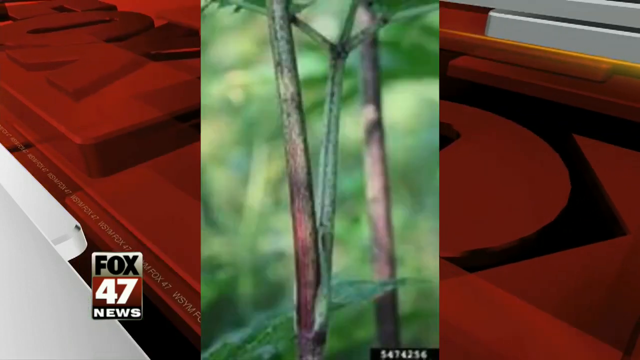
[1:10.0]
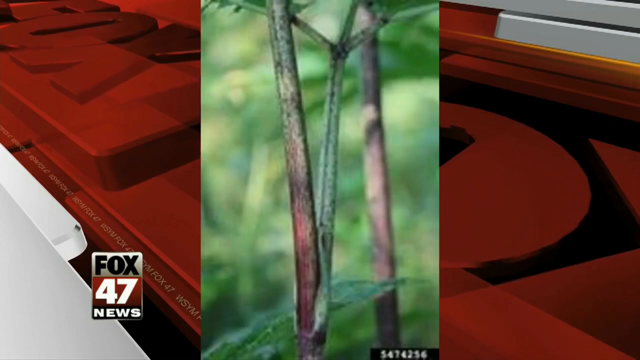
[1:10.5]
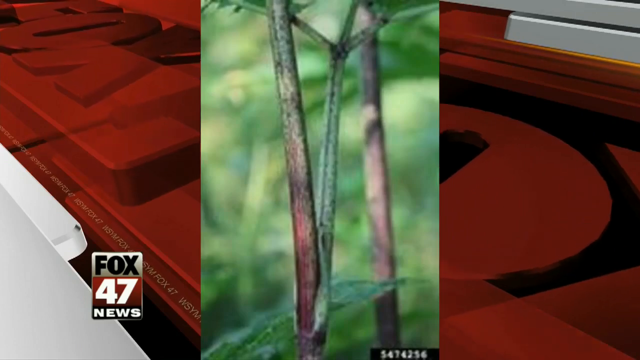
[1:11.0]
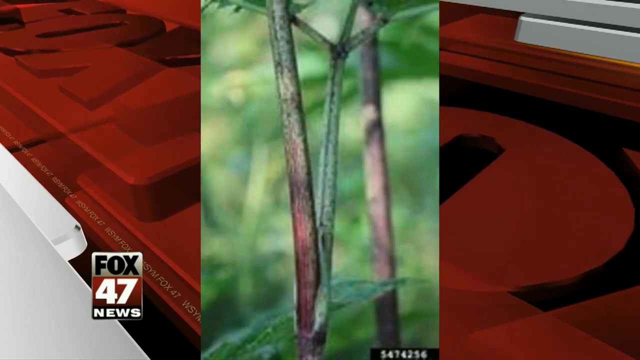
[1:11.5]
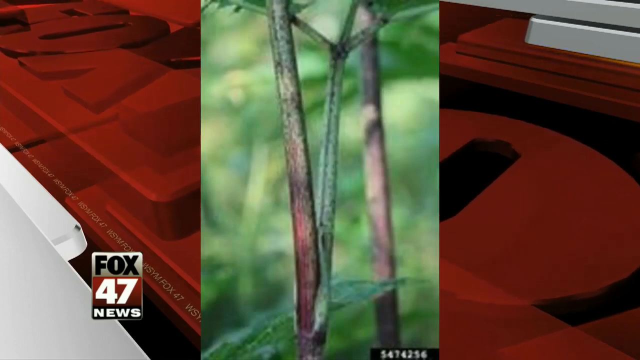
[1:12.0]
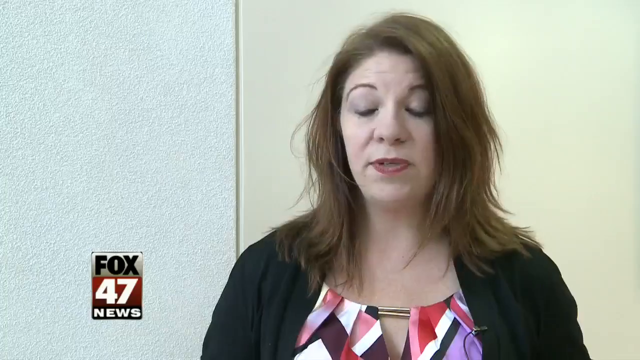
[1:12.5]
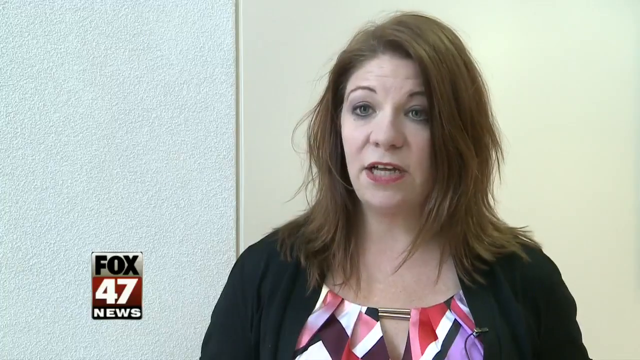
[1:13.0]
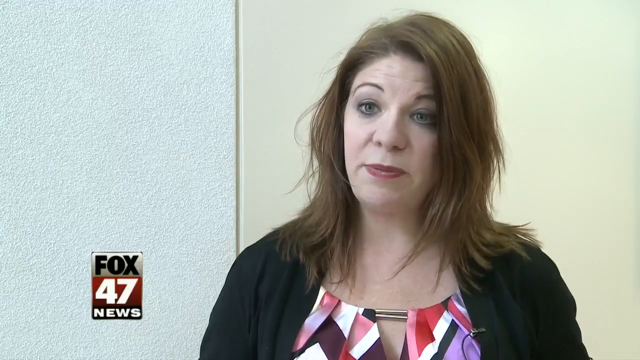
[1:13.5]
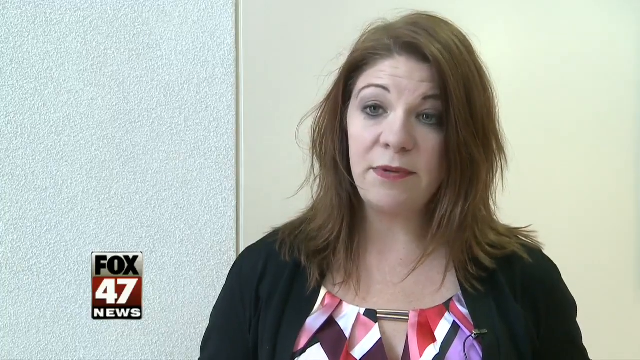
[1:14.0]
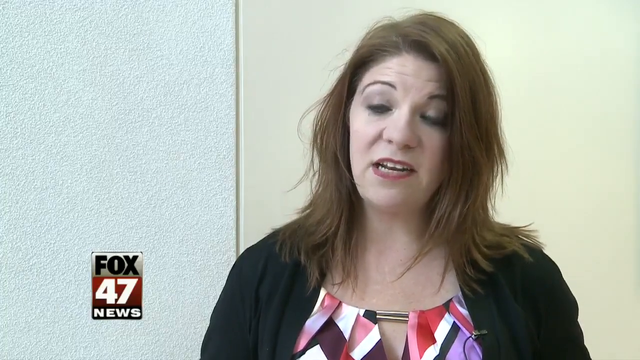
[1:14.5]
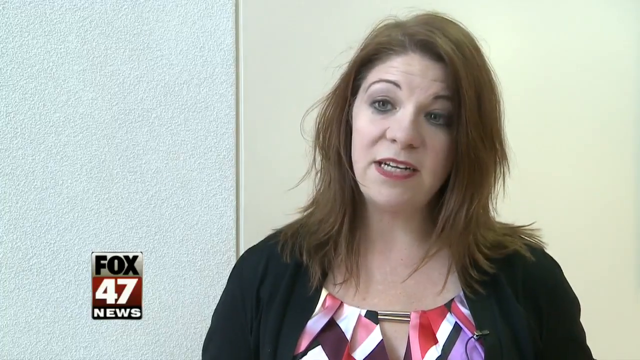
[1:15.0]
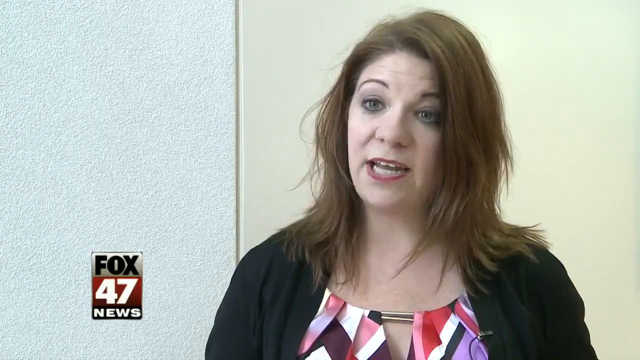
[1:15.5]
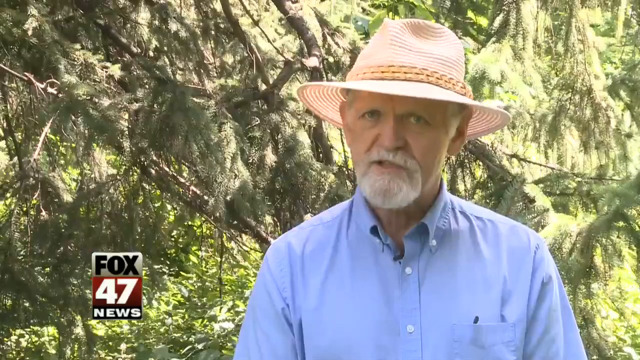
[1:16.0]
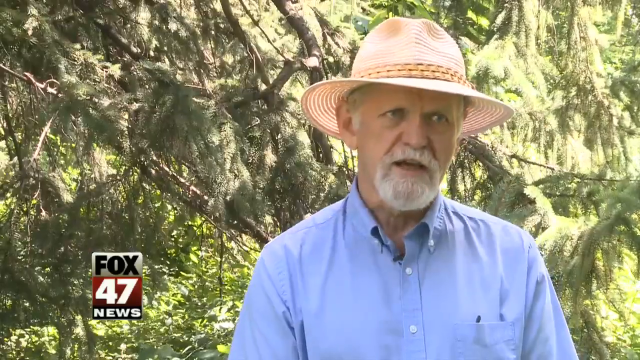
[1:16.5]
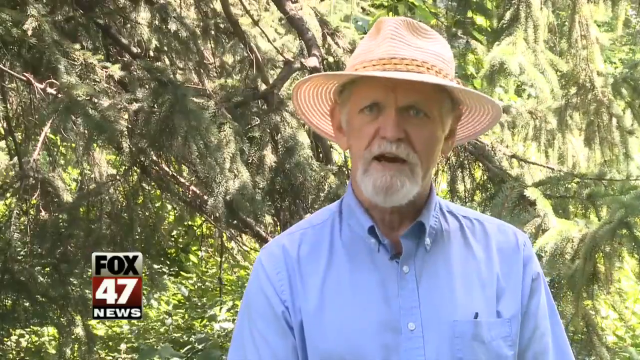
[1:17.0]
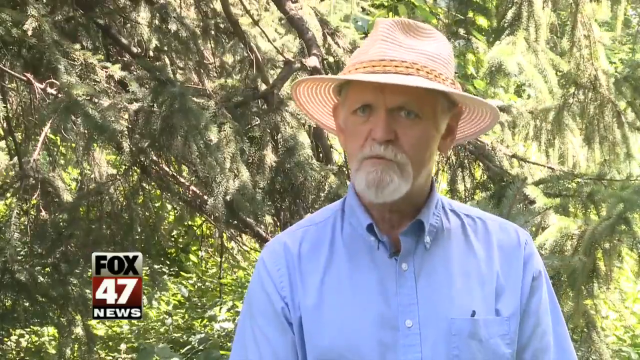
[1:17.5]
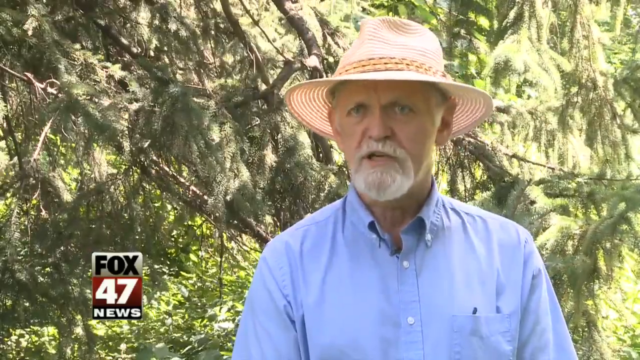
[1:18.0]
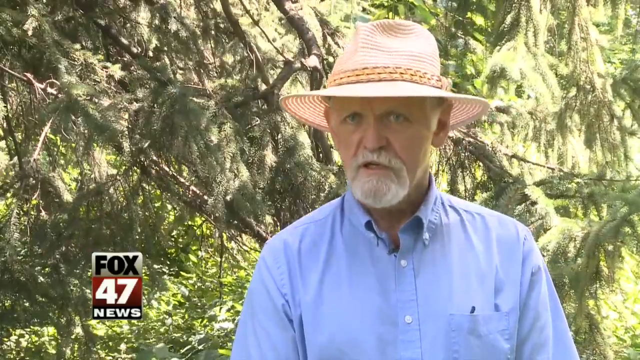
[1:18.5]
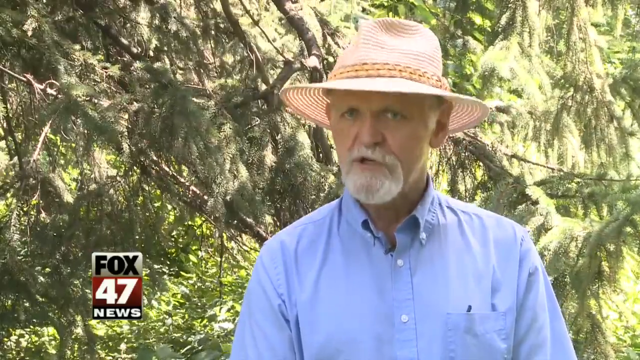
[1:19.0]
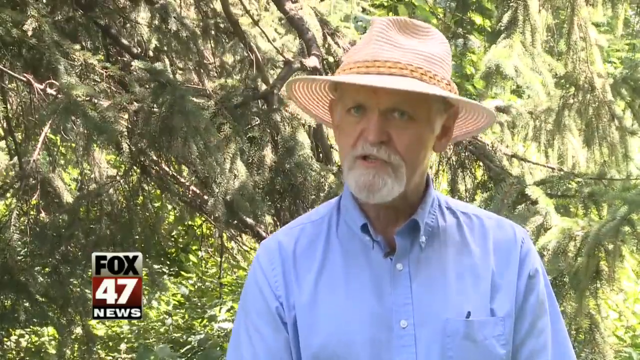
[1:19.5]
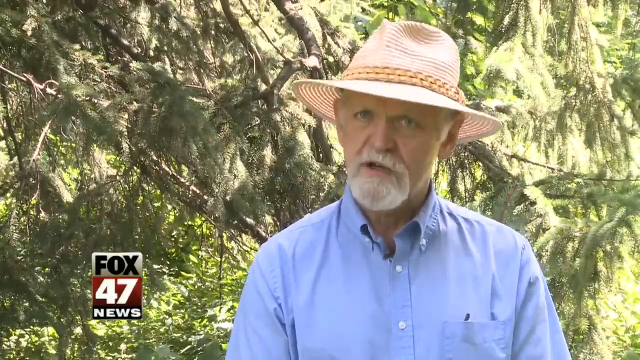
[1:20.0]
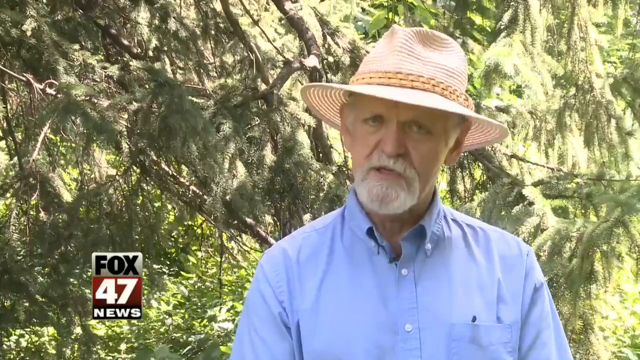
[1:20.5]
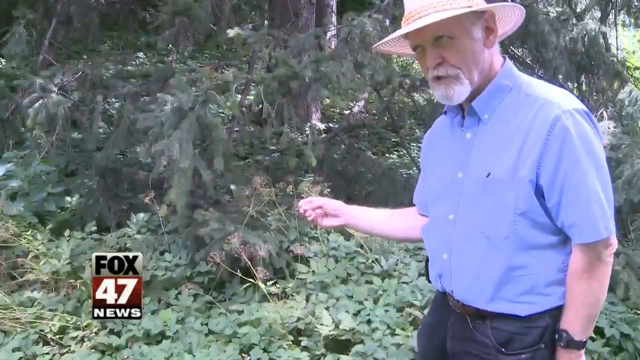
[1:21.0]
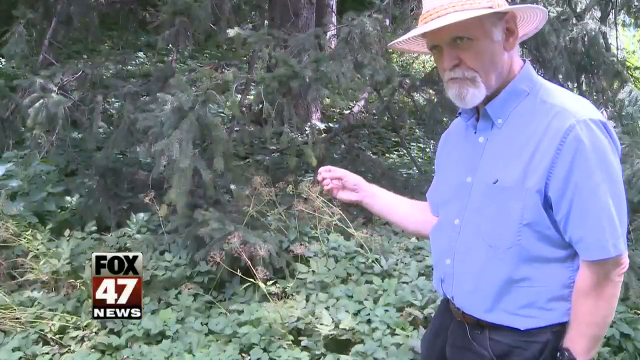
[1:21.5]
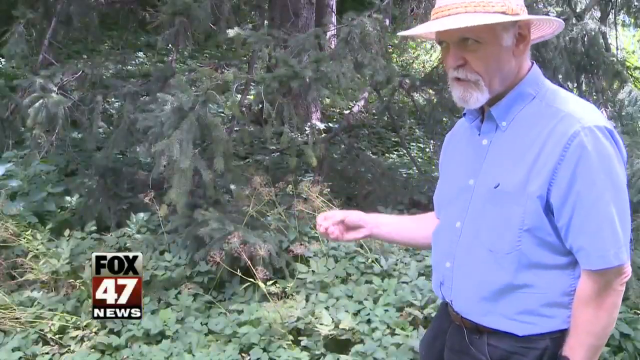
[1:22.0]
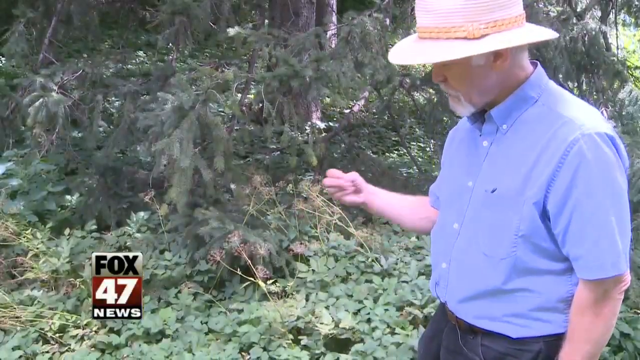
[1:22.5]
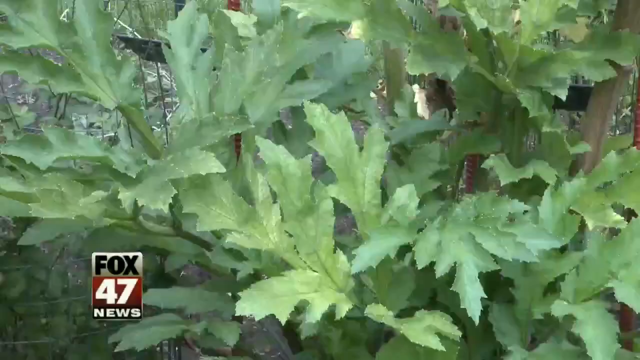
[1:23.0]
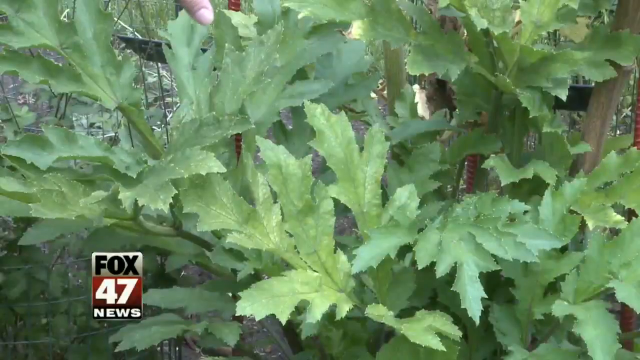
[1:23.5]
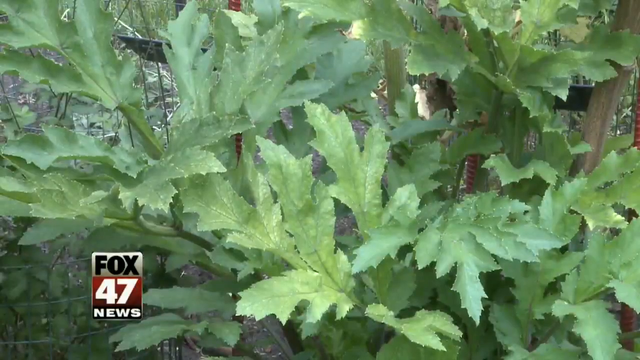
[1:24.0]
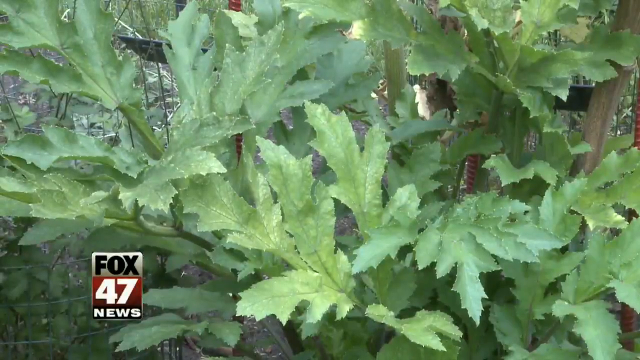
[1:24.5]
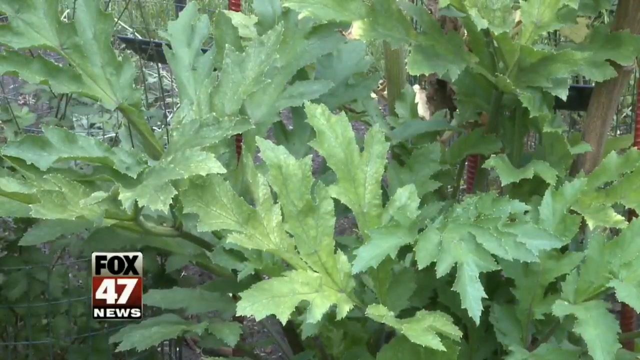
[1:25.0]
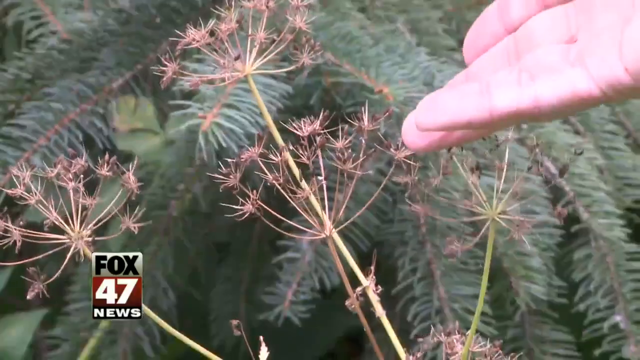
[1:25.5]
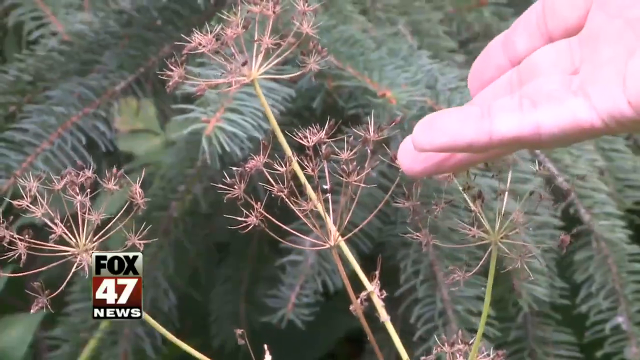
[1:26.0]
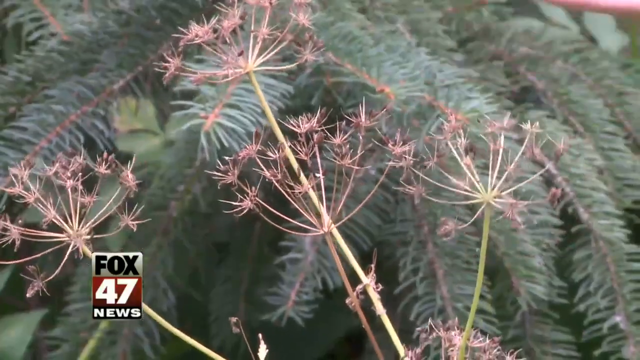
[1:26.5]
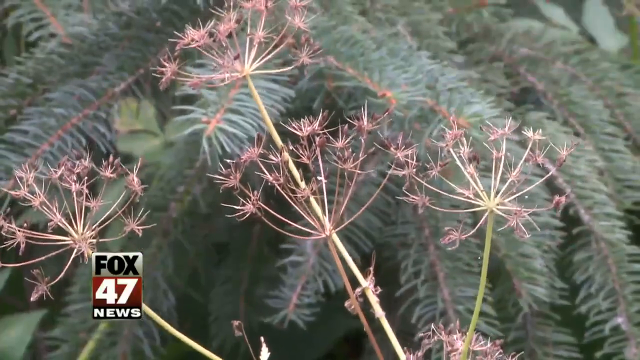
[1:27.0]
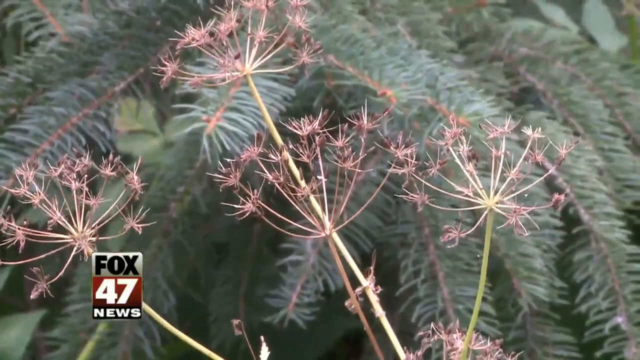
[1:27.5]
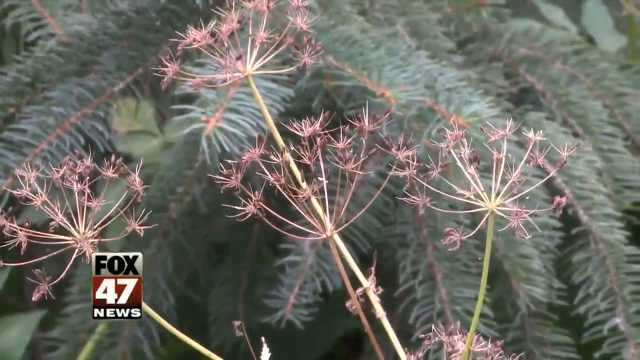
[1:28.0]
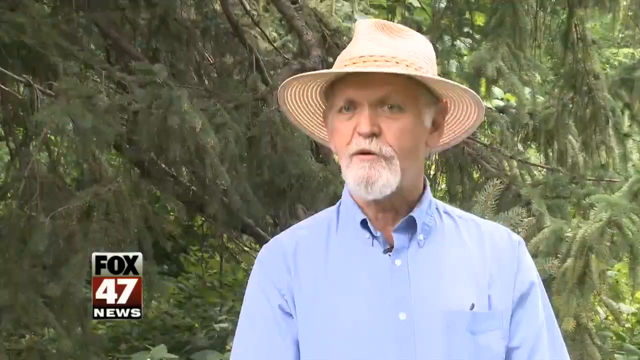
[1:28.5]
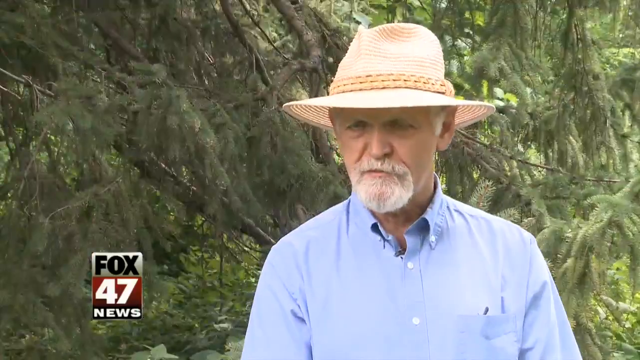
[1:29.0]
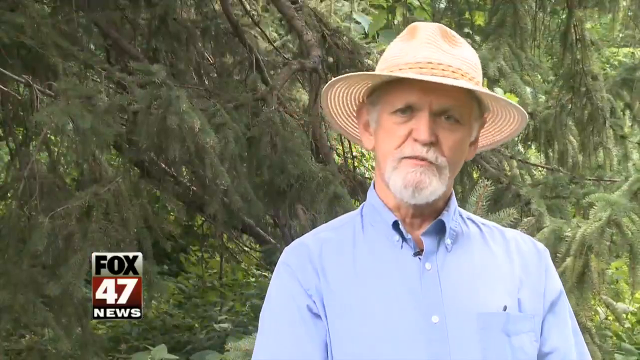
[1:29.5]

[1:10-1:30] Different types of weeds appear in the center of the screen, surrounded by a red and white graphic that moves from left to right. The woman in the black jersey is then shown. Next, a man in a blue shirt with a goatee and a beige hat speaks, looking directly into the camera. He points with his right hand towards various weeds while speaking. The camera shows a close-up of plants, then the man with the goatee is shown again. He keeps looking towards his left as he speaks and shows two or three different types of weeds while talking. The first type of weed is green; the second has very small leaves and red flowers.